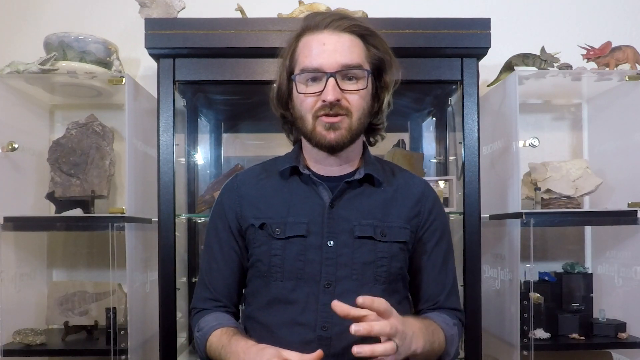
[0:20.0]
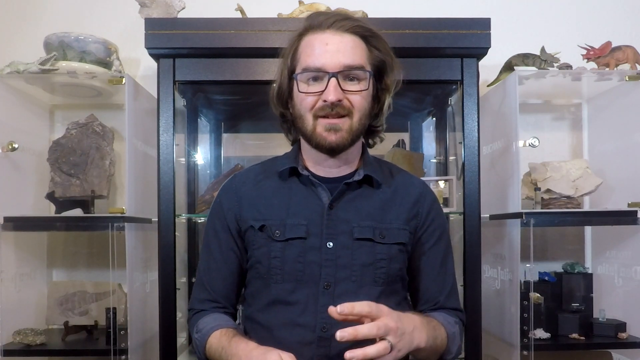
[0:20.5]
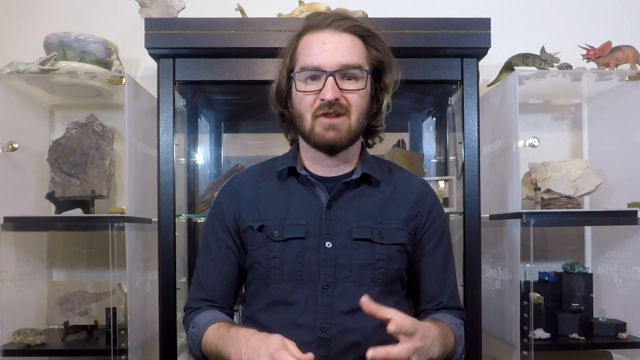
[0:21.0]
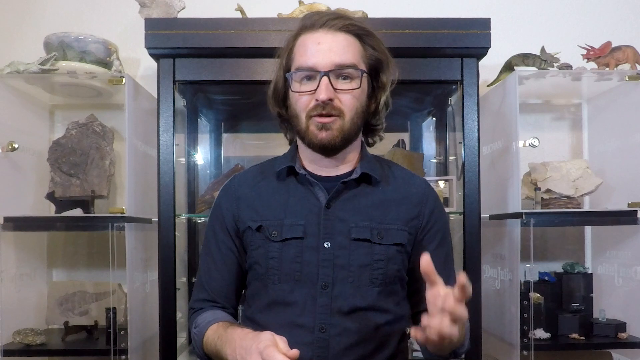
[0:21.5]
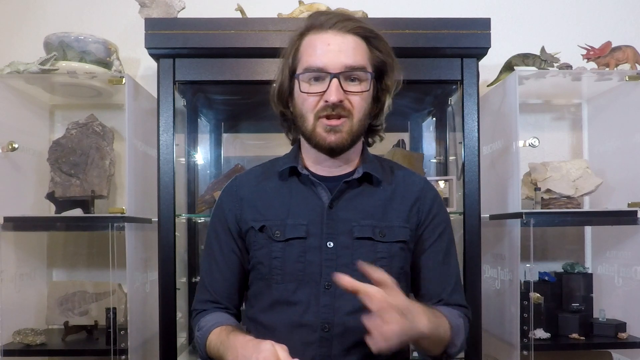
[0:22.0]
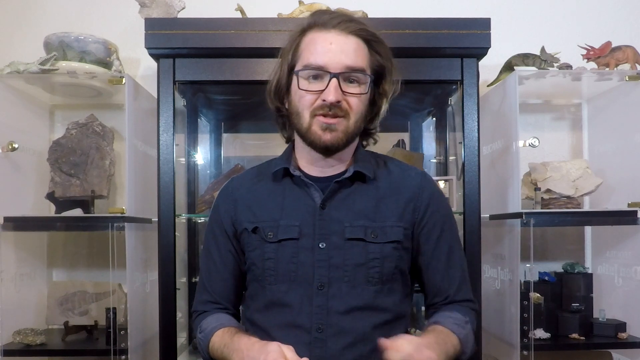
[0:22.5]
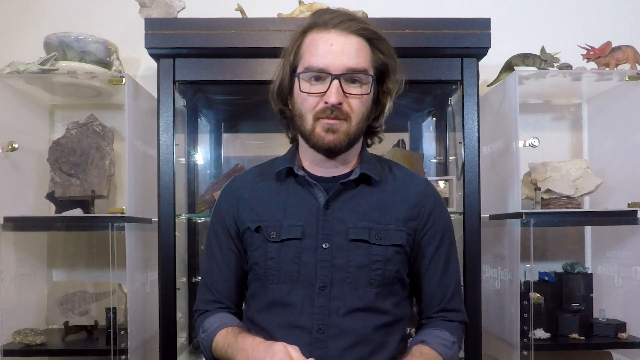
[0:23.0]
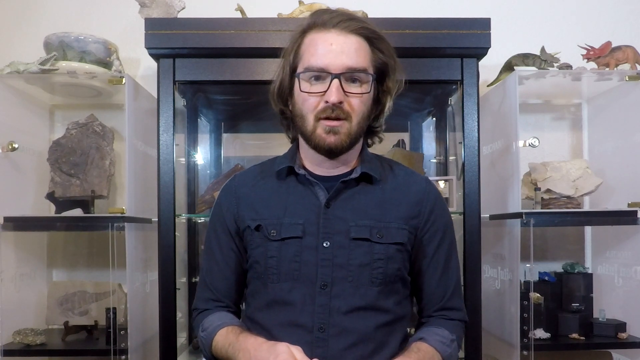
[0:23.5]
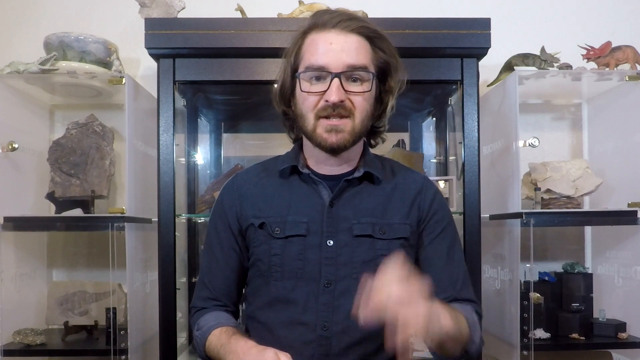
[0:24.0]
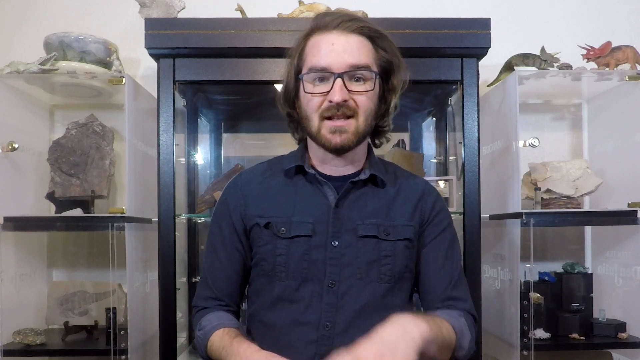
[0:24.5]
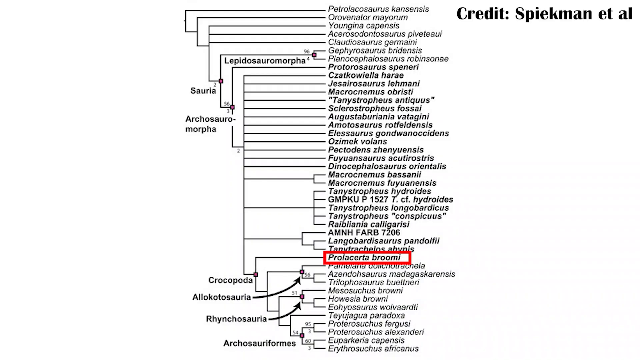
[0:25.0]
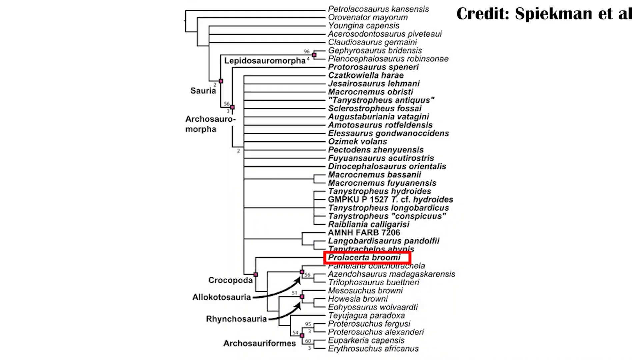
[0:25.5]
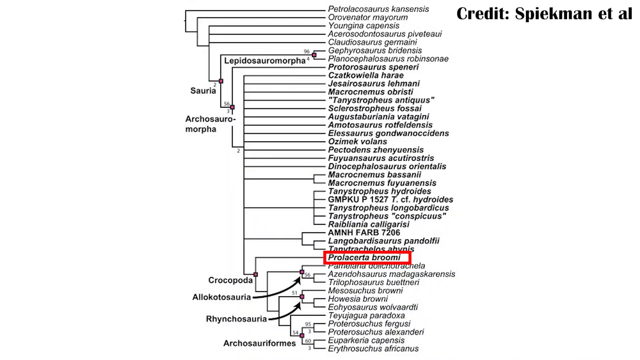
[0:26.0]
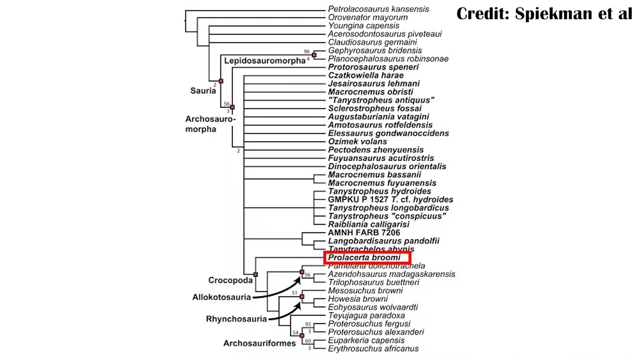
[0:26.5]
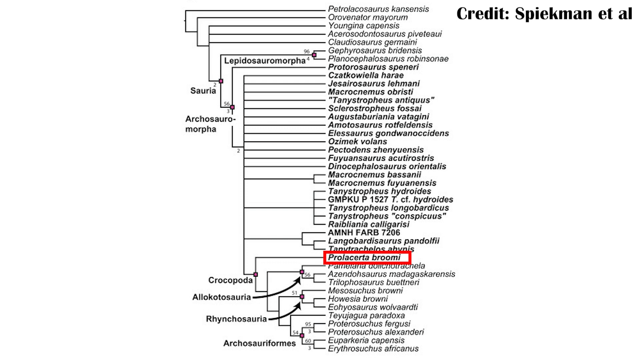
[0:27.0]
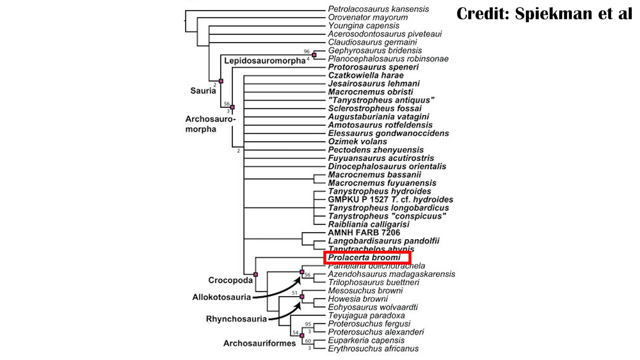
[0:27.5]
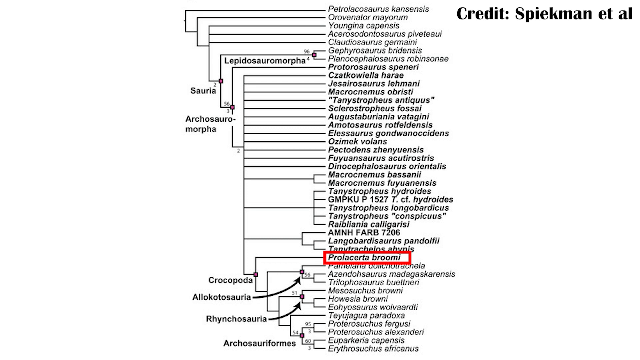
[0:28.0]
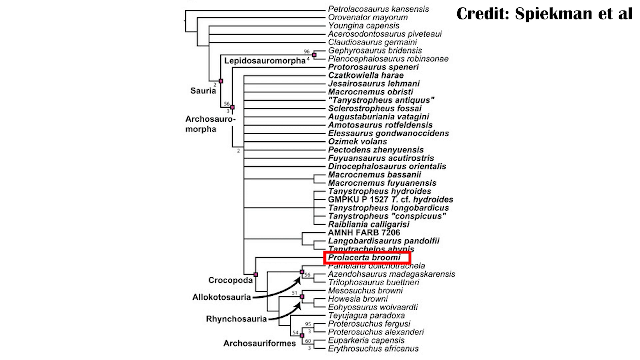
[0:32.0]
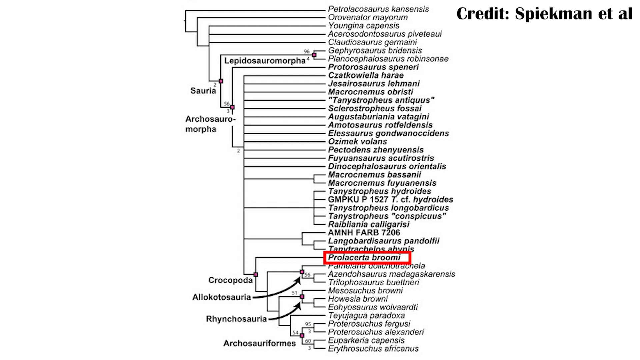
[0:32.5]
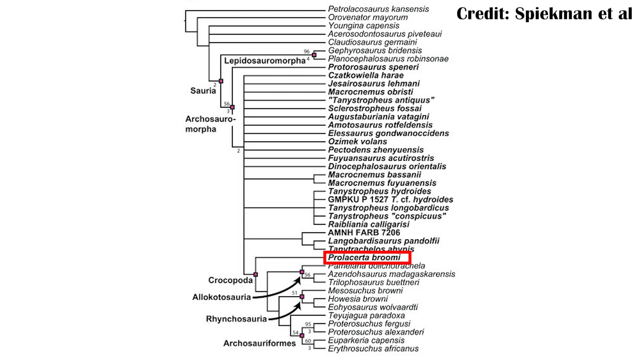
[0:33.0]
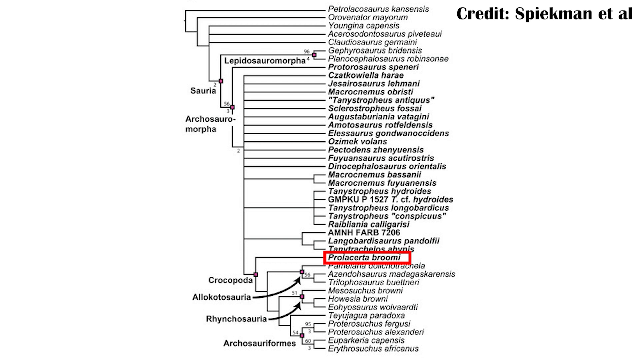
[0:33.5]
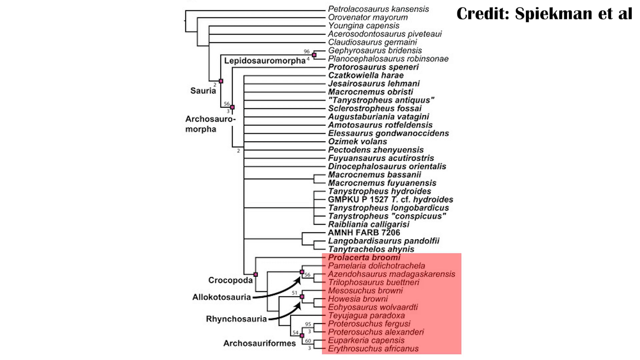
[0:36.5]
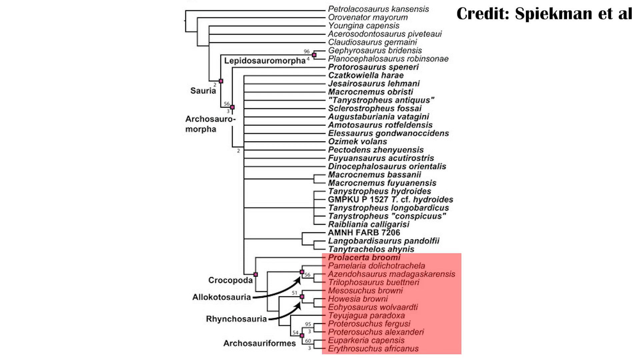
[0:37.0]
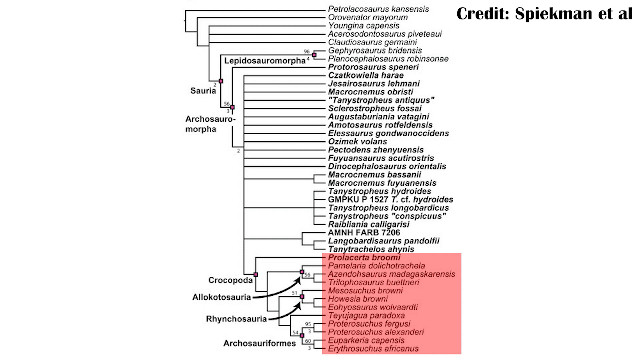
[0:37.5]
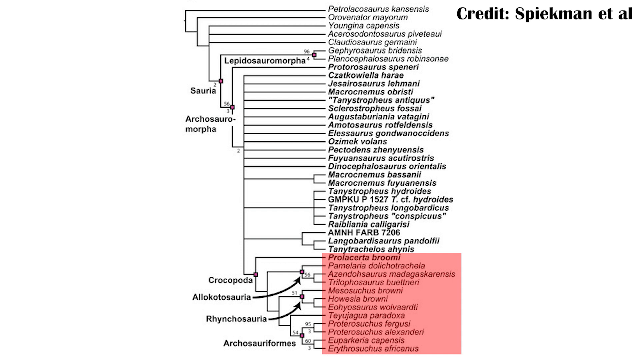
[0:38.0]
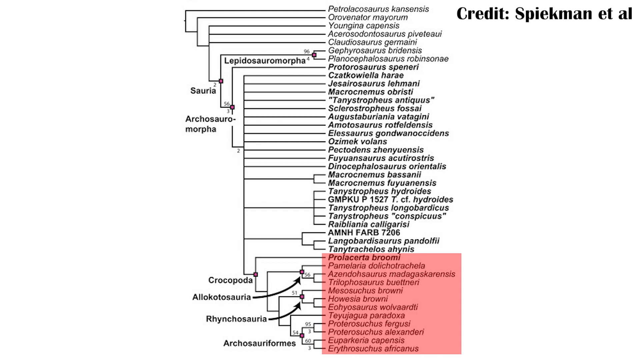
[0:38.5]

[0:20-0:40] The same host stands in front of a display case full of fossils, dinosaur bones and other extinct plant life, moving his right arm a lot for emphasis as he talks. A chart then appears, a phylogenetic tree focusing on the relationships between extinct marine dinosaurs, listing names separated by genus and family. One name on a main branch is "Arcosaurosauromorpha", which splits into two branches with many sub-branches. A name boxed in red is "Prolacerta brumii", which comes from the main branch "Crocopoda"; Crocopoda splits in two and then branches off again into other branches, one of which leads to Prolacerta brumii. The chart stays on screen for about 10 seconds, and then a large portion of the names, starting from Prolacerta brumii and going all the way down, is boxed in or highlighted in a pink box; apparently there are more than 10 names in it.